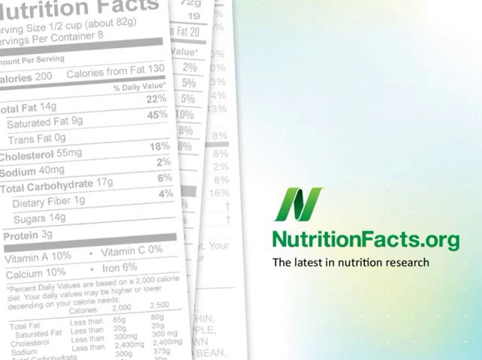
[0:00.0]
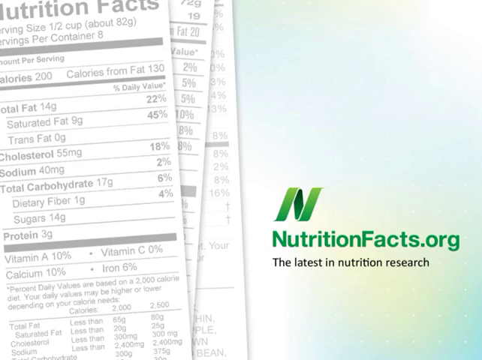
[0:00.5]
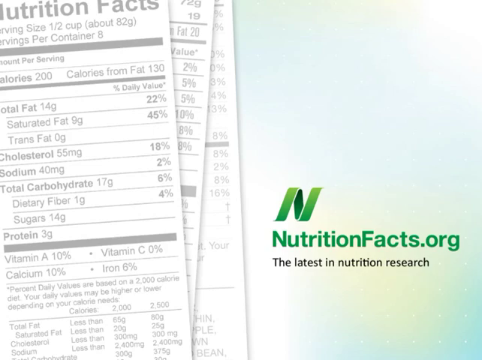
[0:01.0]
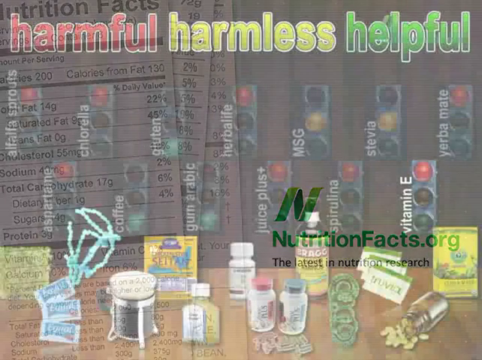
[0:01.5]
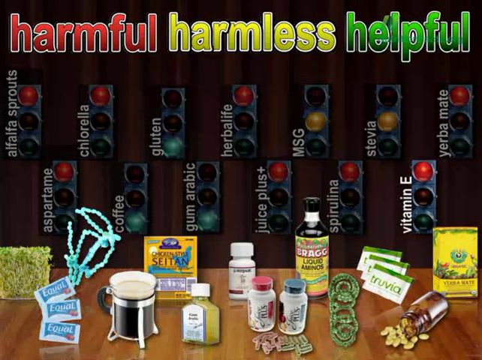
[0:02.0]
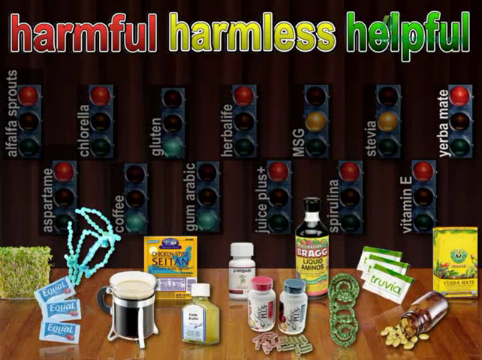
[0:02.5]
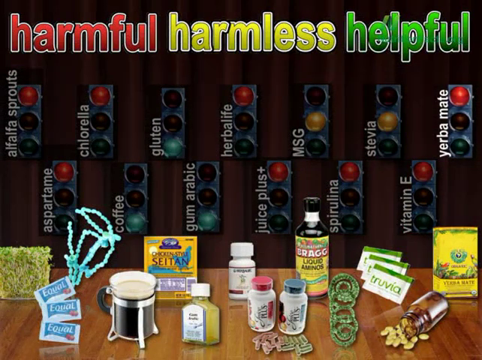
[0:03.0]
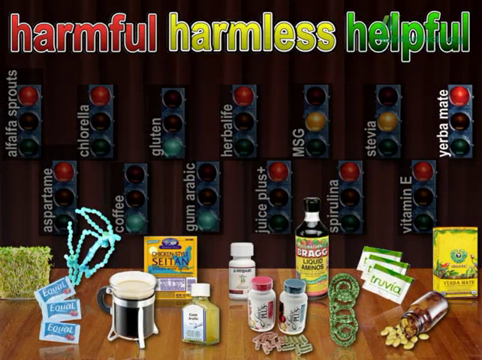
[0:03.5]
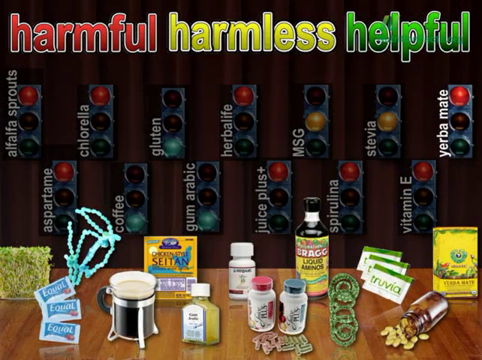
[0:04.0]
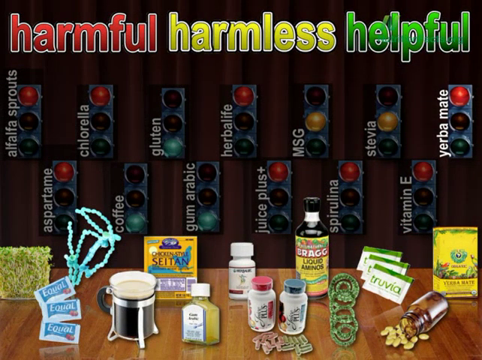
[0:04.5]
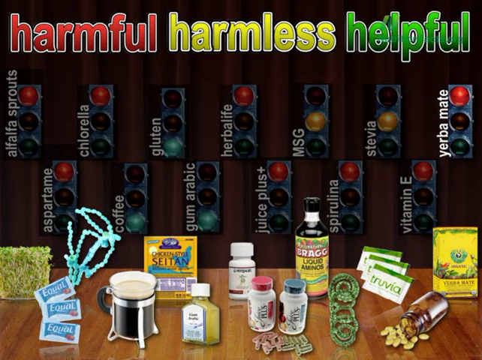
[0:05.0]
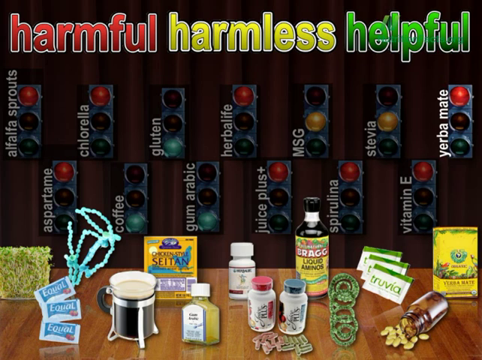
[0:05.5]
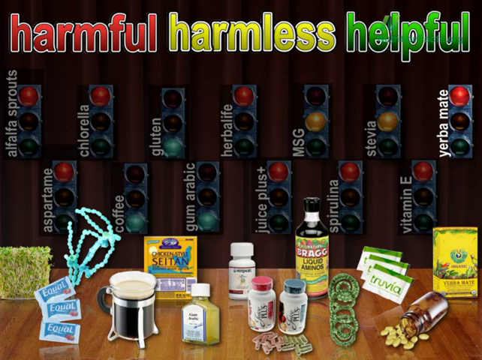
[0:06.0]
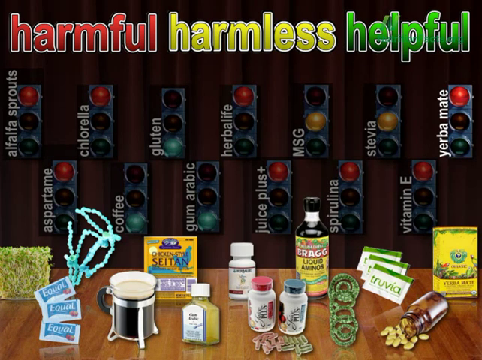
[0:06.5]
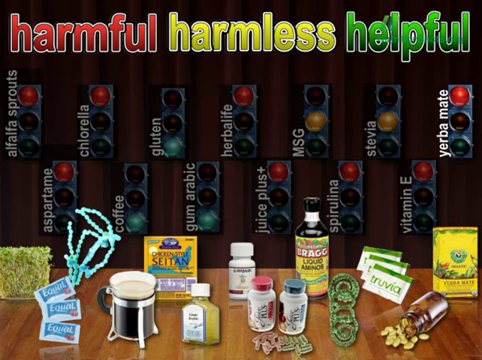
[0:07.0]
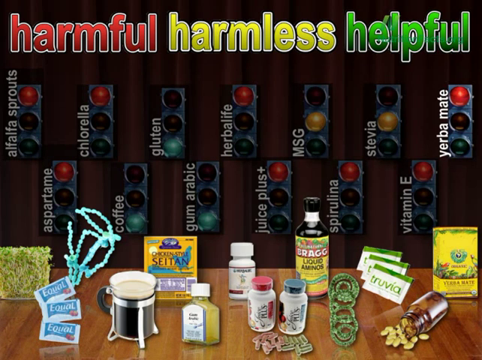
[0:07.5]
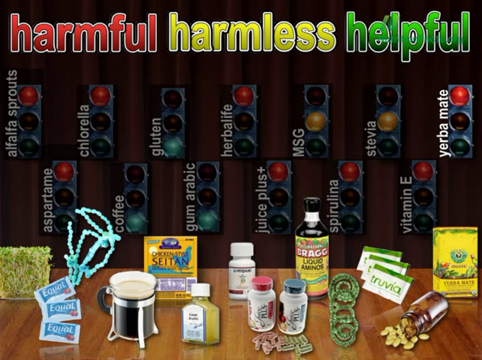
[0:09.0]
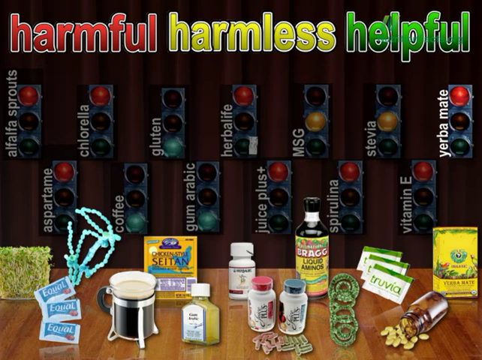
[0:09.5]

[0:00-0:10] The words "Harmful," "Harmless" and "Helpful" appear across the top from left to right, in red, yellow and green respectively. Below the headings are a dozen traffic lights labeling items: "alfalfa sprouts" is red, "Chlorella" is red, "Gluten" is green, "Herbalife" is red, "MSG" is yellow, "Stevia" is yellow, "Yerba mate" is red, "Aspartame" is red, "Coffee" is green, "Gum arabic" is green, "Juice plus+" is red, "Spirulina" is red and "Vitamin E" is red. Along the bottom are various medicine bottles and boxes, including "truvia," "SEITAN" and "EquaL," though most are too blurry to make out. The scene then fades.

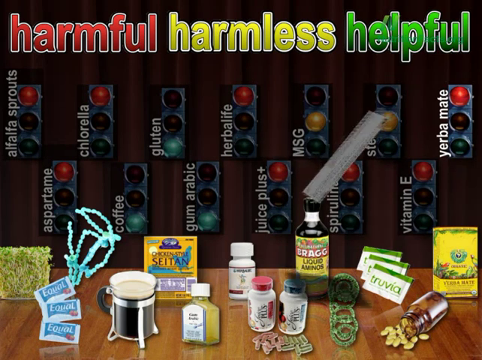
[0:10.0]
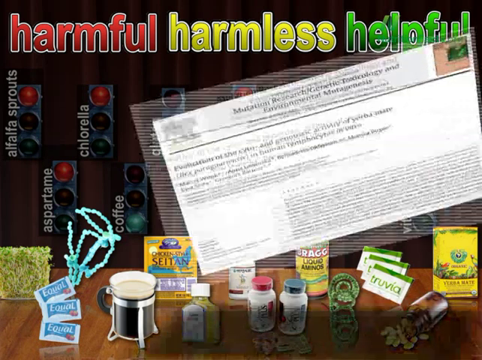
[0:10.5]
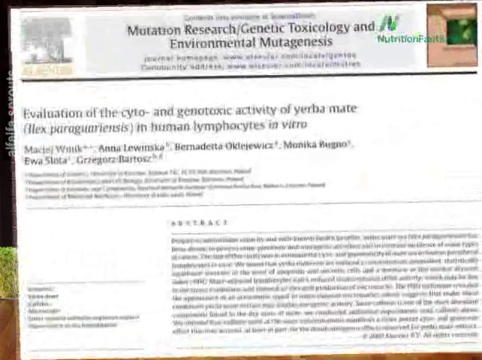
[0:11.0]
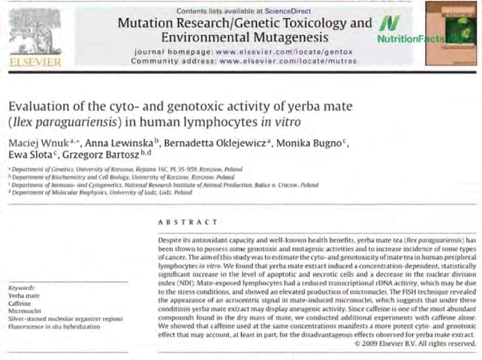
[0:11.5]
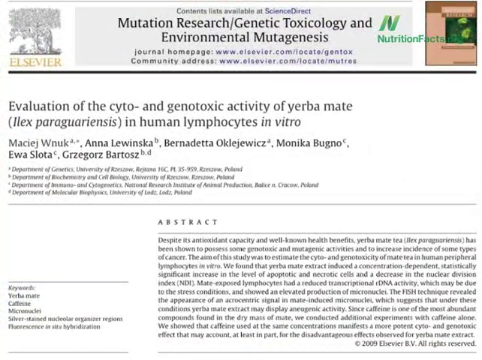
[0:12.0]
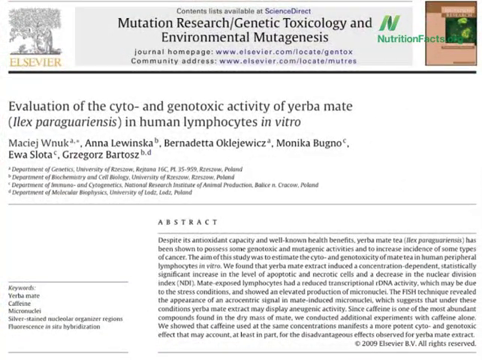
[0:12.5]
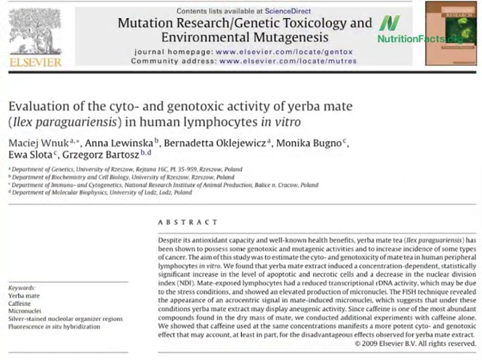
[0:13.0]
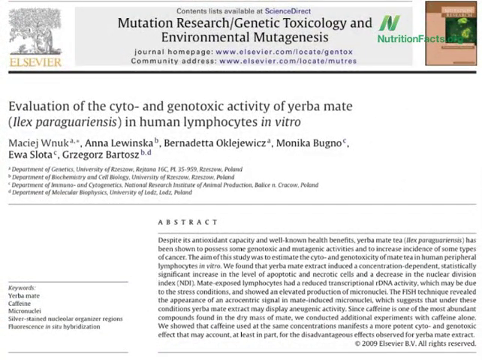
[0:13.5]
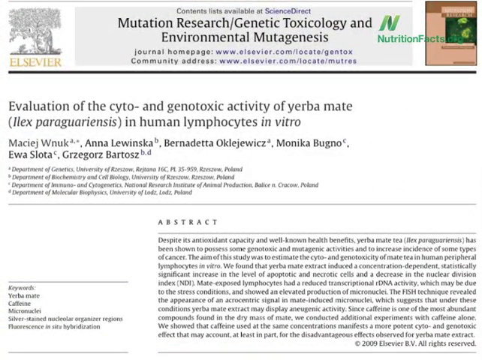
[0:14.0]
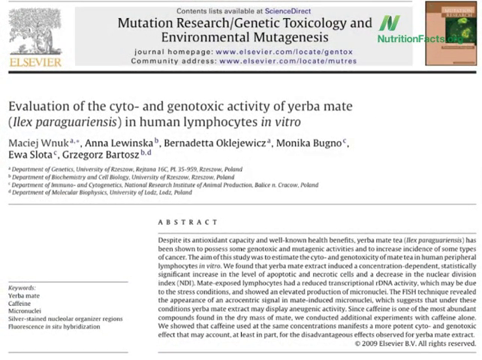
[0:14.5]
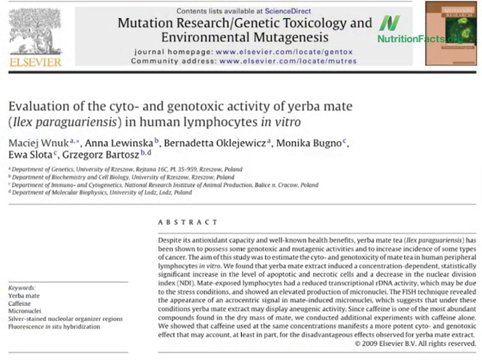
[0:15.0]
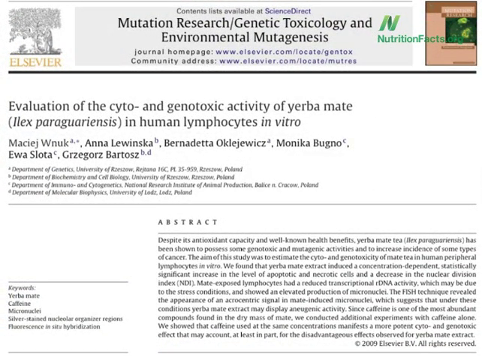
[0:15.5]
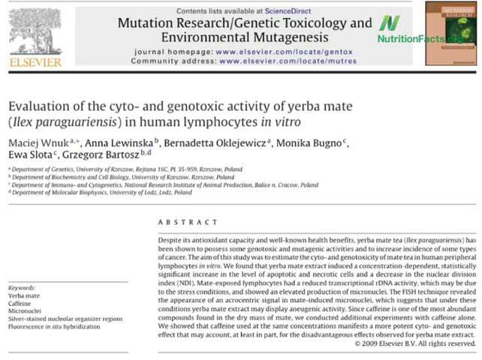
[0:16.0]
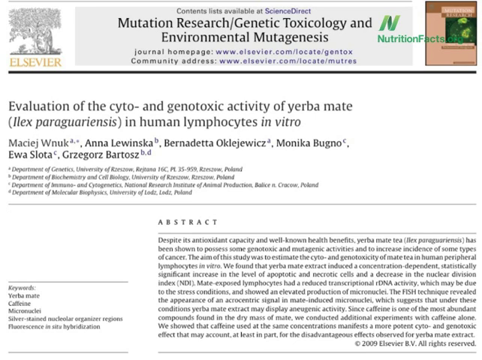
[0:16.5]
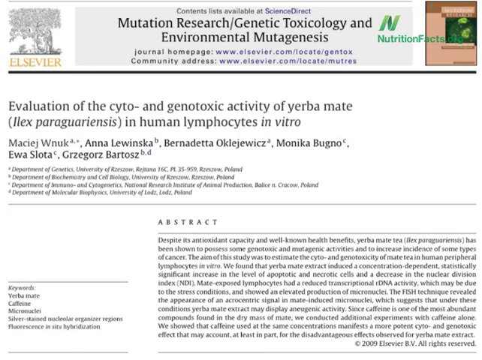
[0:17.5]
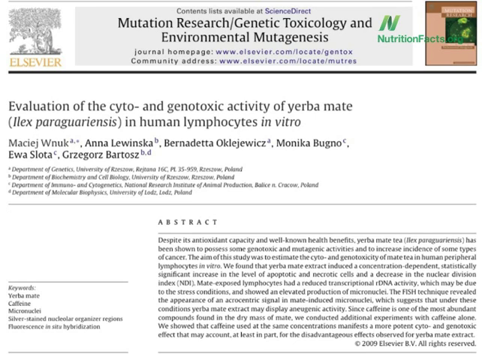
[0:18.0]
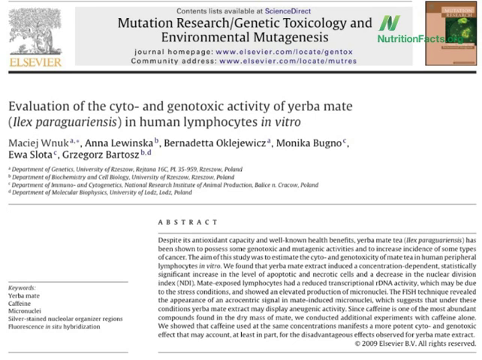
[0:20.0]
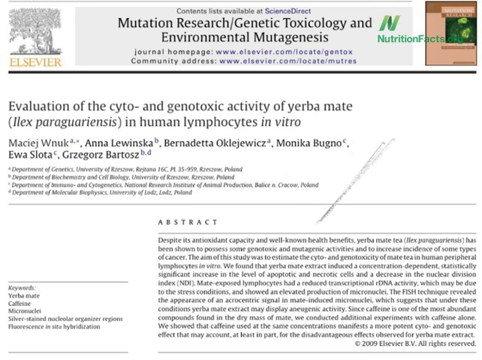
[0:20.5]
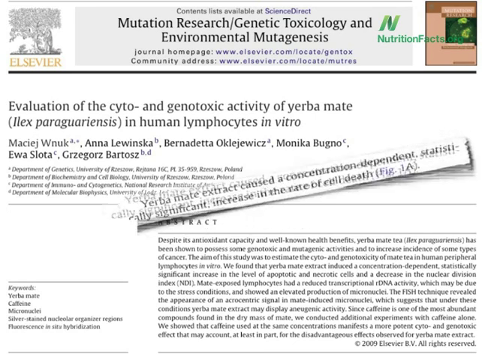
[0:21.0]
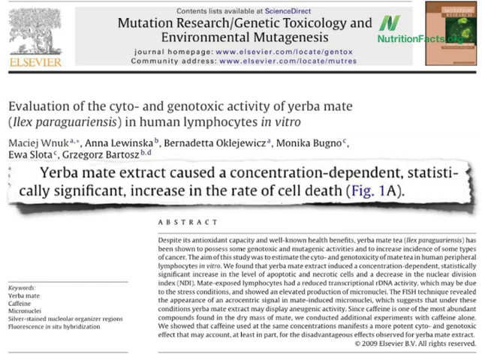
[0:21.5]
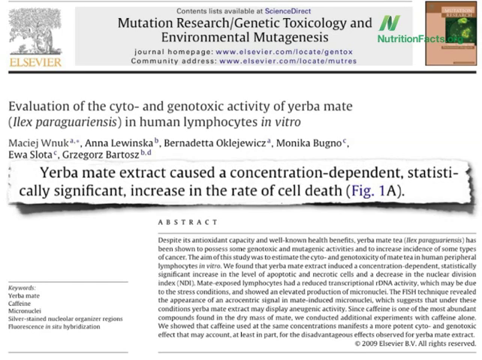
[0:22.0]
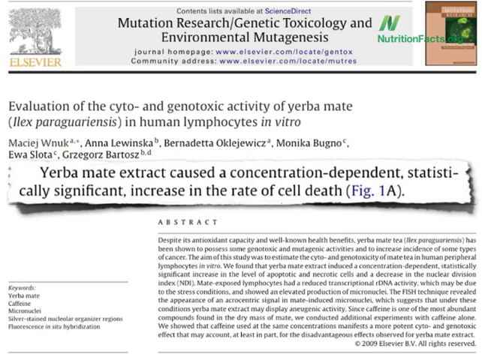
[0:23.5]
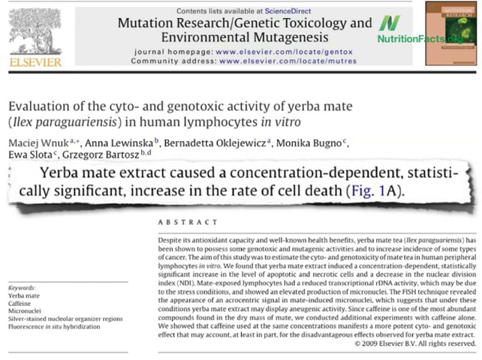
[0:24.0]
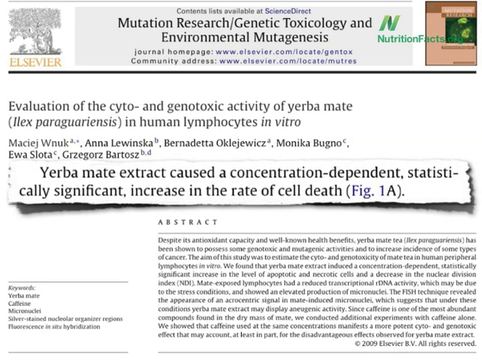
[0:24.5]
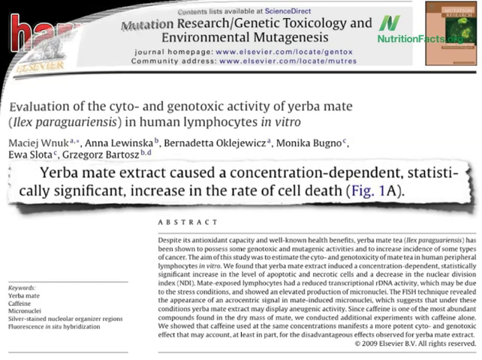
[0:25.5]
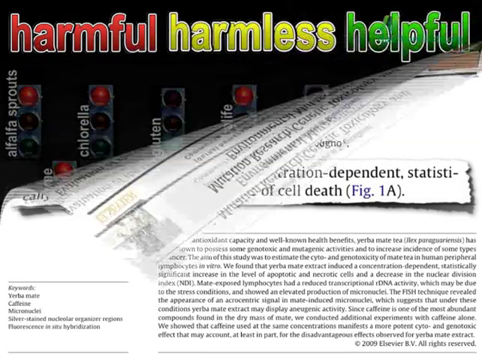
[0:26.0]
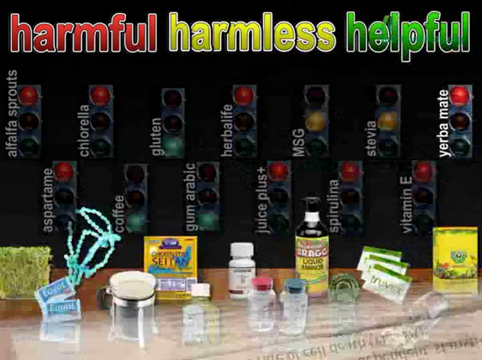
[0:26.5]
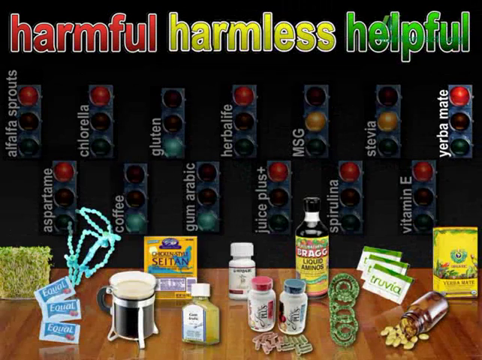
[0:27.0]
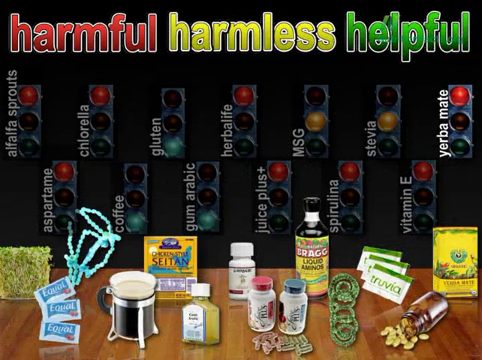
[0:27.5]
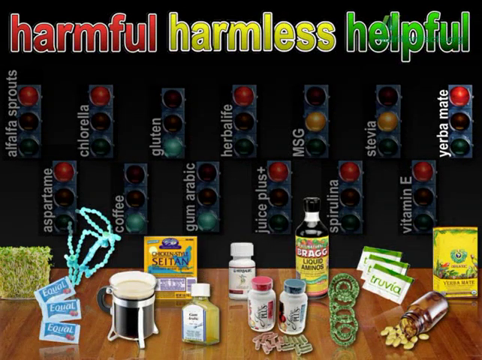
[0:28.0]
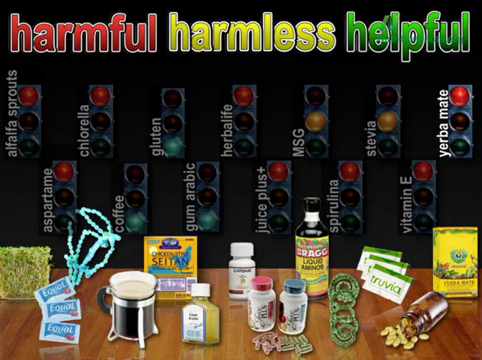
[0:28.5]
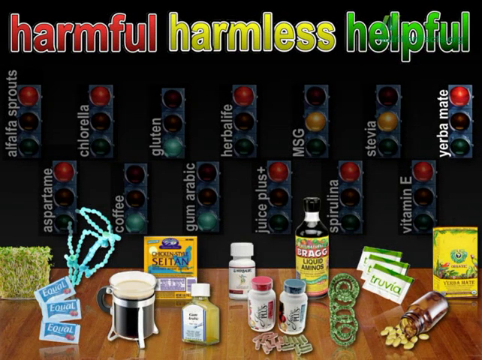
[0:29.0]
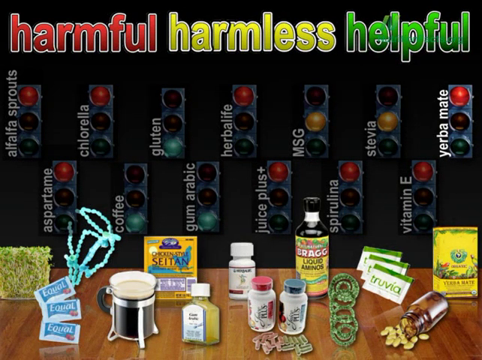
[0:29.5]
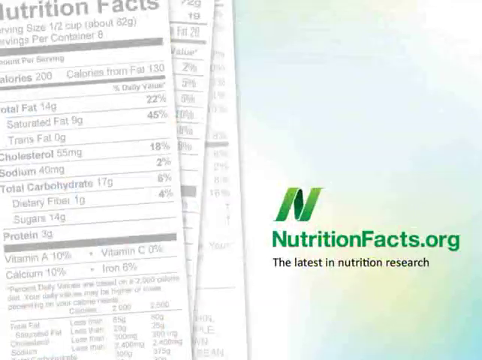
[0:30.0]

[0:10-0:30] A paper flies out from the center of the screen, showing its title, the author's name and an abstract. The title reads "Evaluation of cyto- and genotoxic activity of yerba mate (Ilex paraguariensis) in human lymphocytes in vitro". The text of the abstract is too blurry to read at first; after a while the text becomes much clearer and the author's name can be made out. A short paragraph flies out from the center of the article and becomes a small piece of paper. A special effect then folds the view down from the upper left corner, and the earlier picture reappears: the words "Harmful" in red, "Harmless" in yellow and "Helpful" in green at the top, some traffic lights in the middle, and many foods at the bottom.